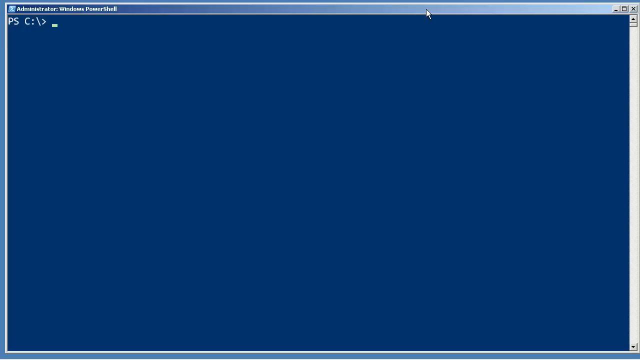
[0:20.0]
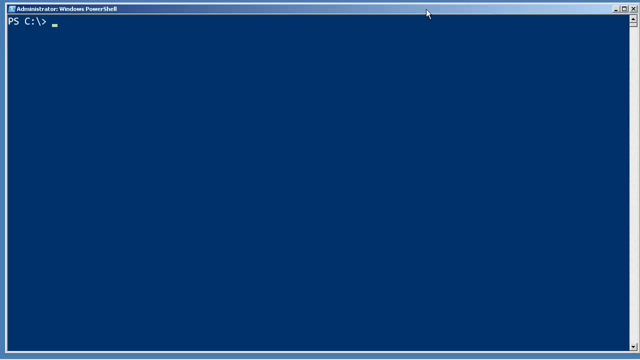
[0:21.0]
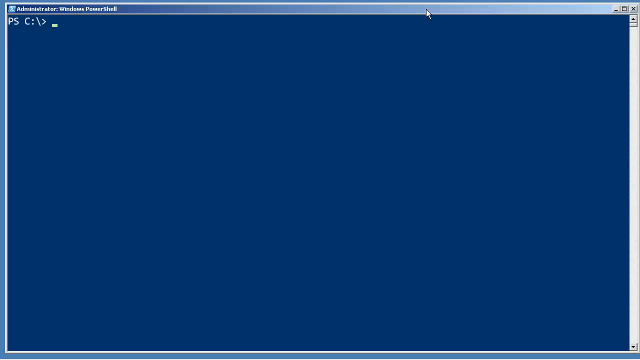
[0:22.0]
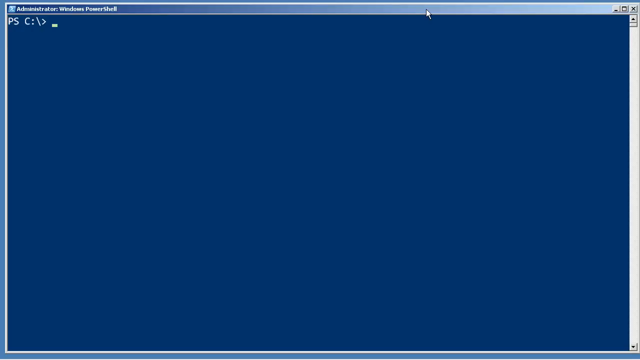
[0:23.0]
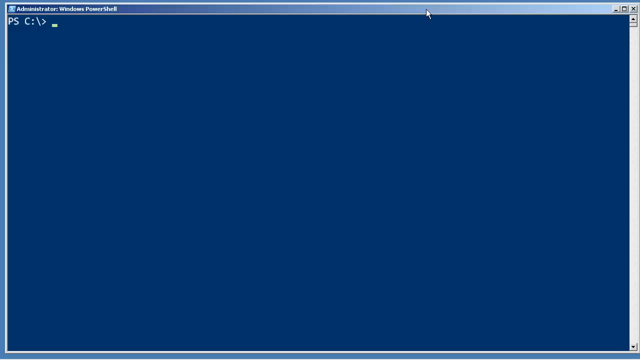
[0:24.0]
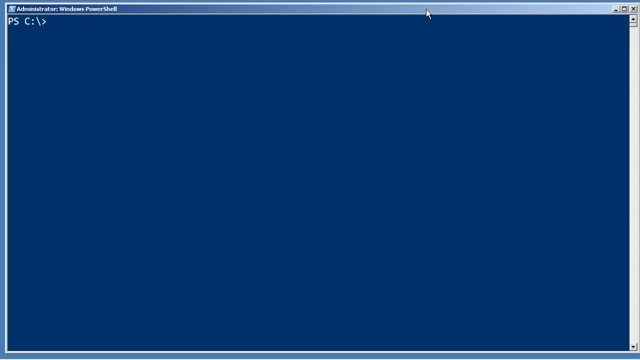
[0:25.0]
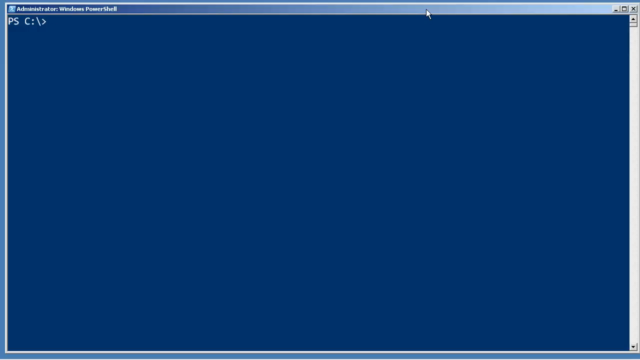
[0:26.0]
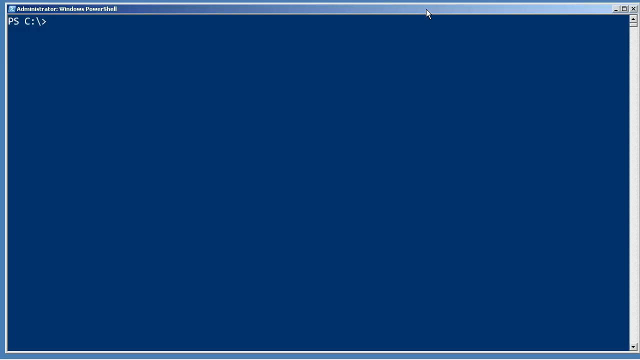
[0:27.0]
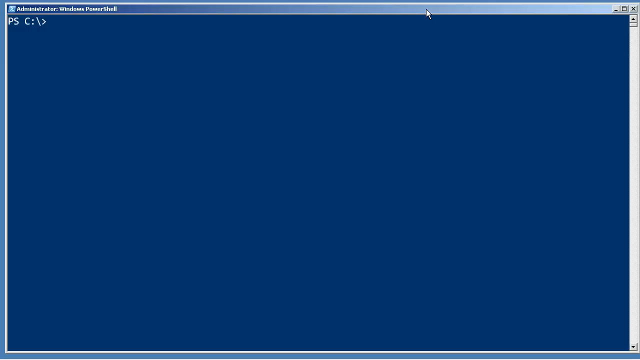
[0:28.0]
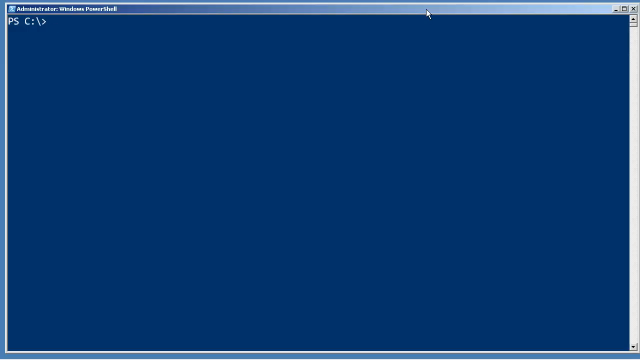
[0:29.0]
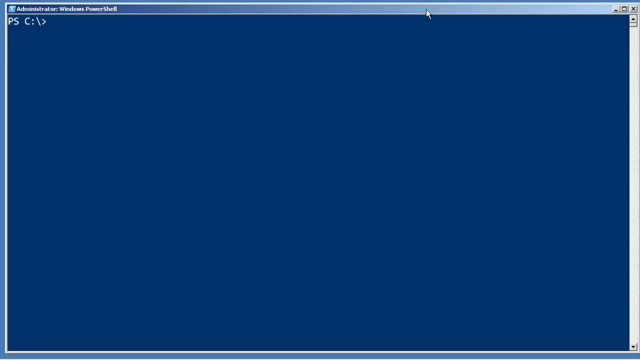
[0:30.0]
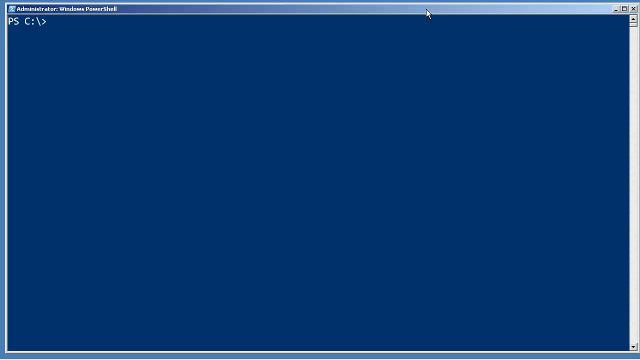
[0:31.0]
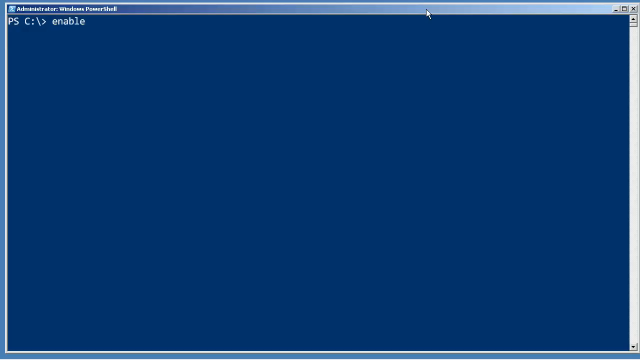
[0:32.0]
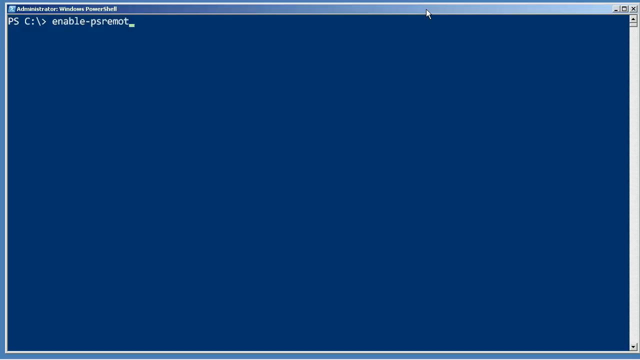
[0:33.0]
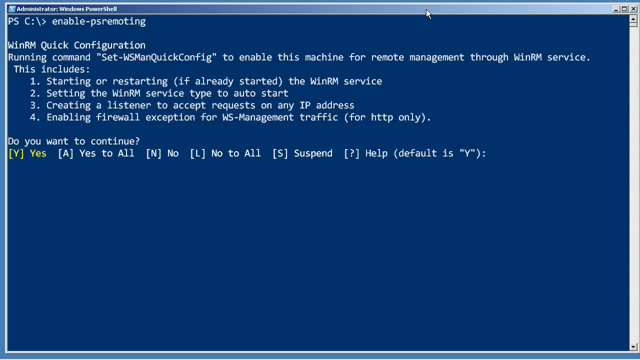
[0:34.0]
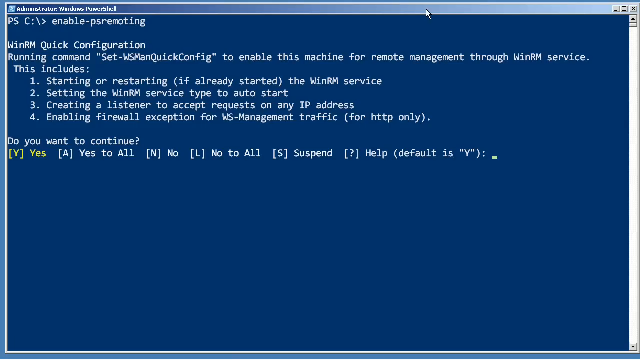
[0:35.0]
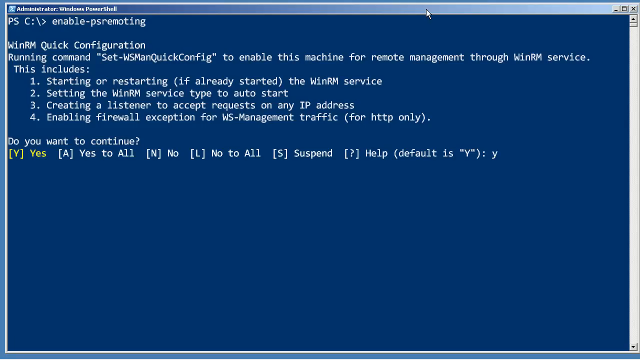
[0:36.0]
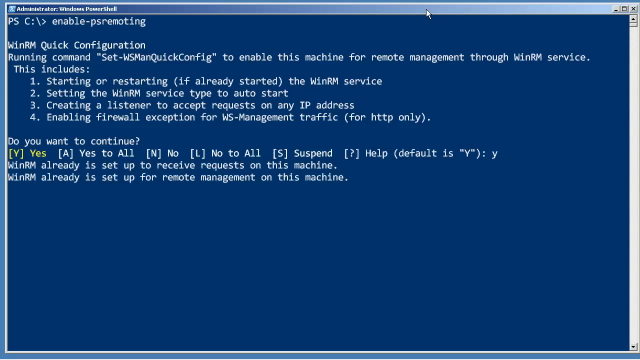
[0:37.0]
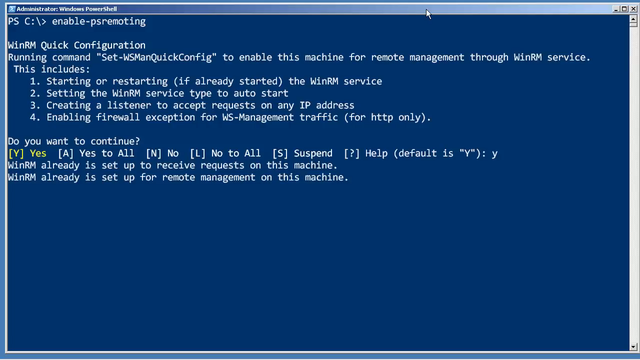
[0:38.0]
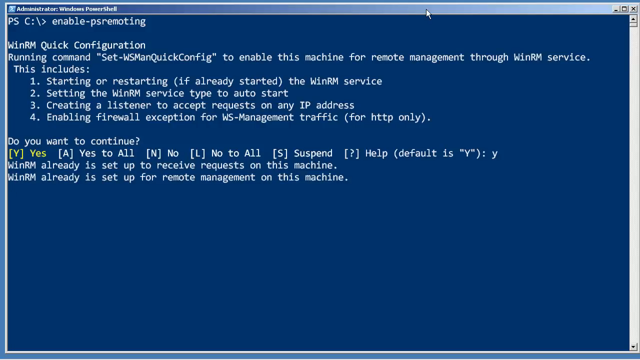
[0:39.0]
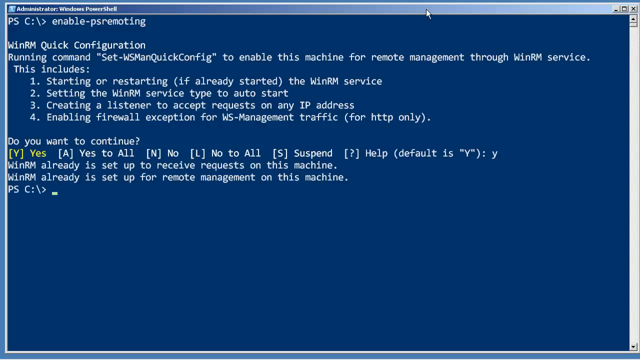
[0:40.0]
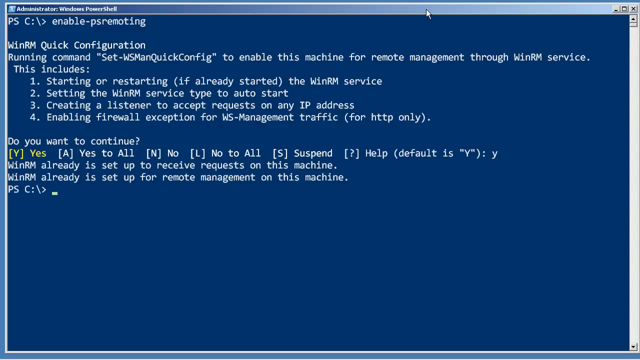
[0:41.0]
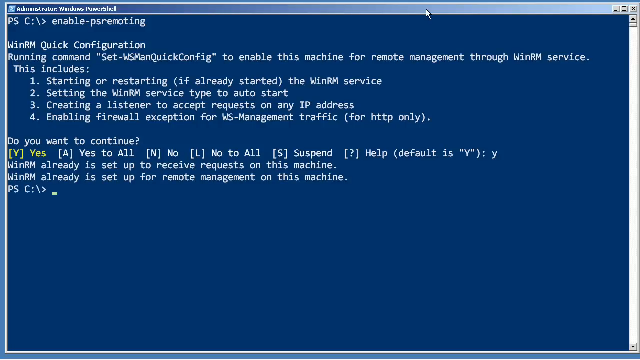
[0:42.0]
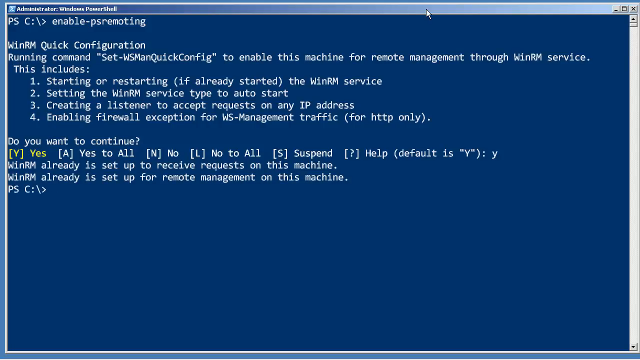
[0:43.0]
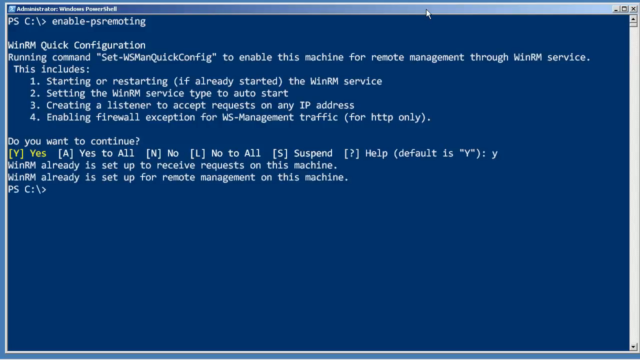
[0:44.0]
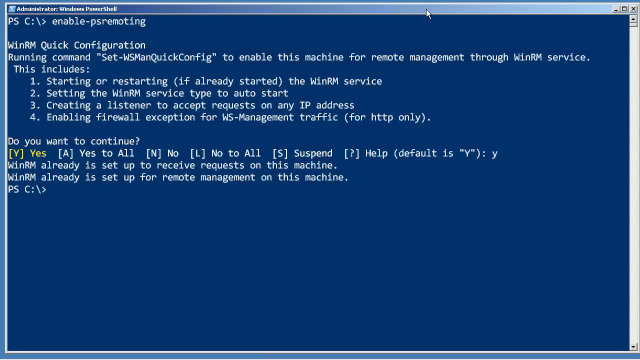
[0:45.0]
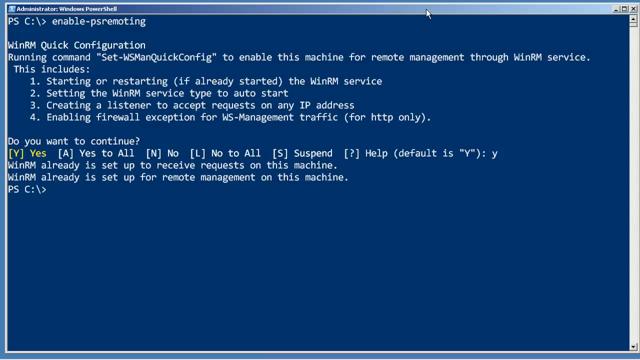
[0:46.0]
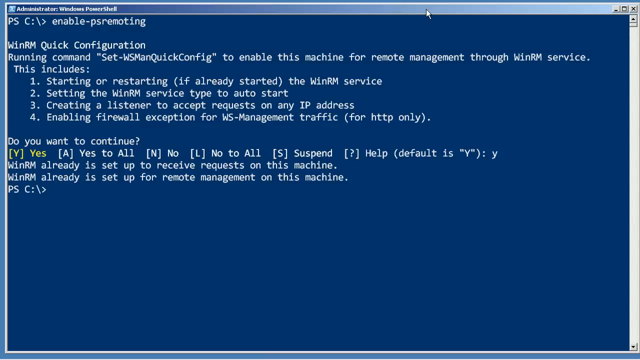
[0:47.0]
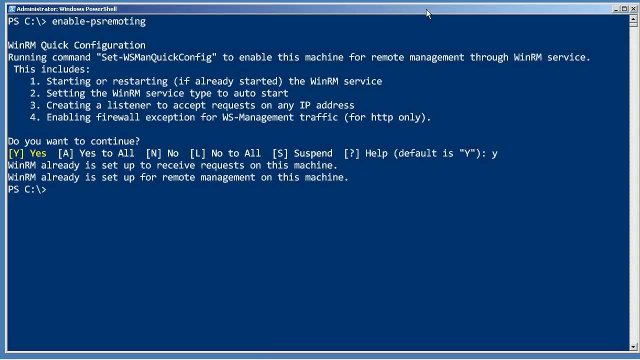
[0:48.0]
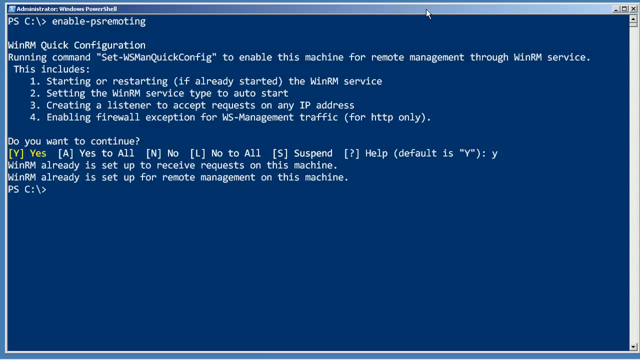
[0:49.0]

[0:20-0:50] In the upper left corner, the prompt beginning with "ps" with a slash and a closing bracket is shown, and the cursor blinks where more could be typed. For a while nothing is typed; then "enable-ps remote" is entered. After some space, a large block of text pops up, including "WinRM quick configuration," "run a command," and "enable this machine for remote management through WinRM service." It continues with "this includes": "1. start or restart (if already started) the WinRM service," "2. set the WinRM service type to autostart," "3. create a listener to accept requests on any IP address," and "enabling firewall exception for WS management traffic (for HTTP only)." It then asks, "do you want to continue?"